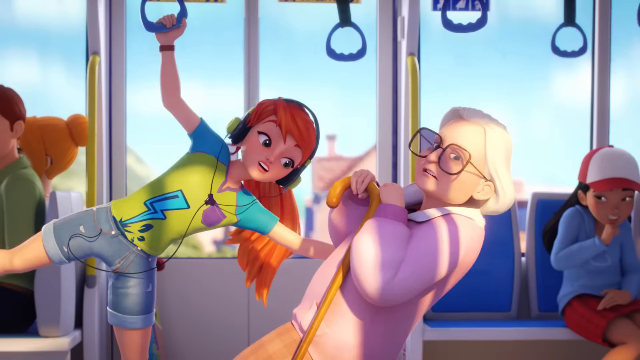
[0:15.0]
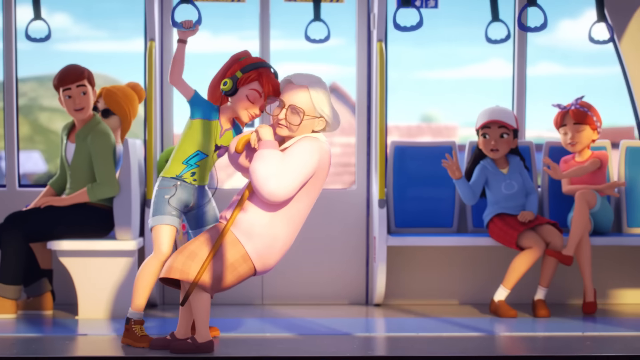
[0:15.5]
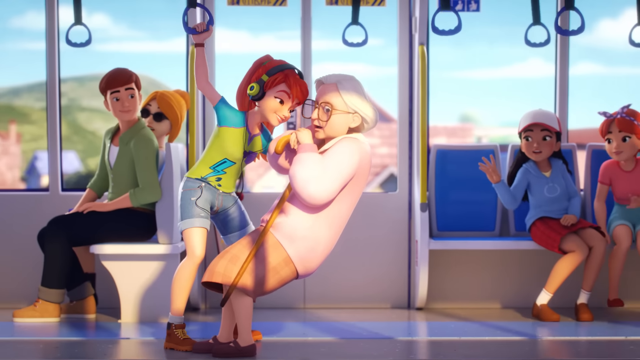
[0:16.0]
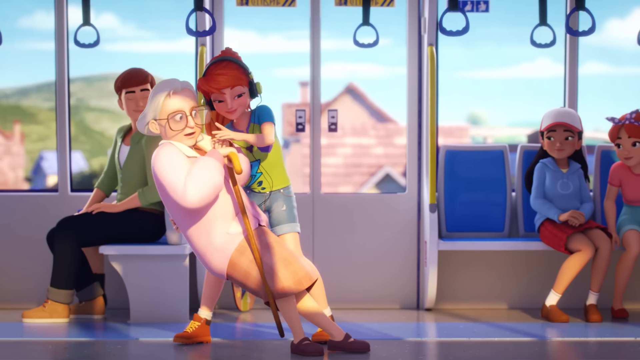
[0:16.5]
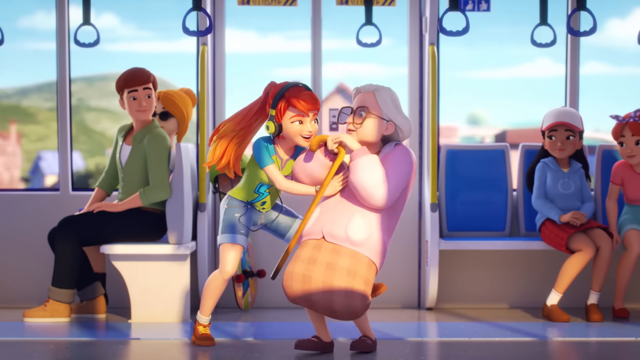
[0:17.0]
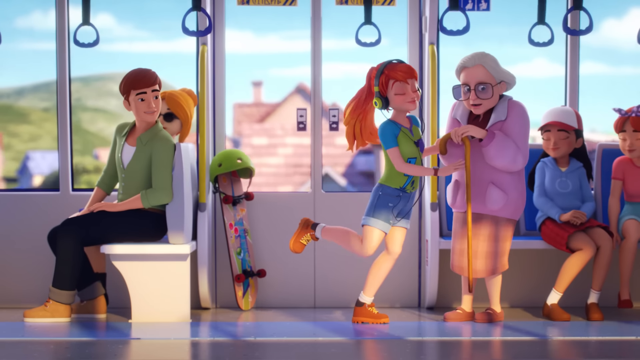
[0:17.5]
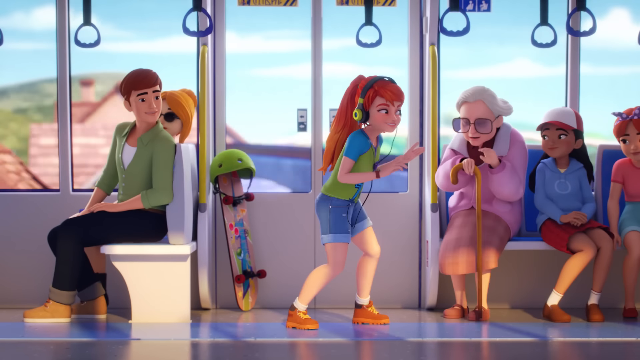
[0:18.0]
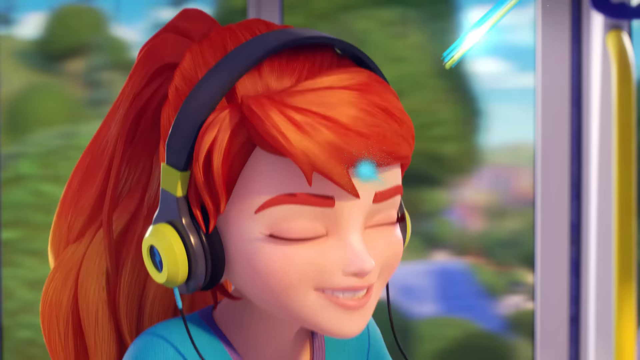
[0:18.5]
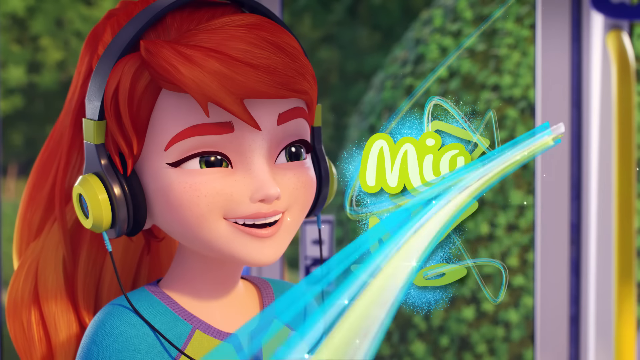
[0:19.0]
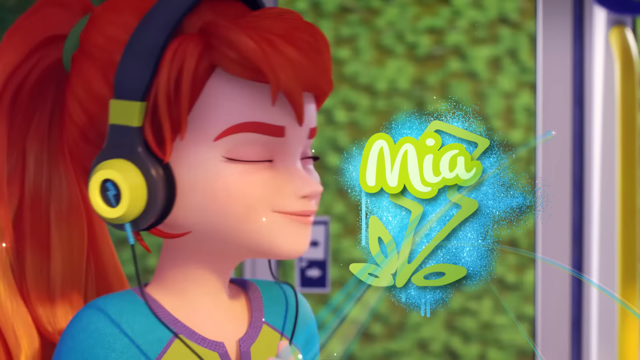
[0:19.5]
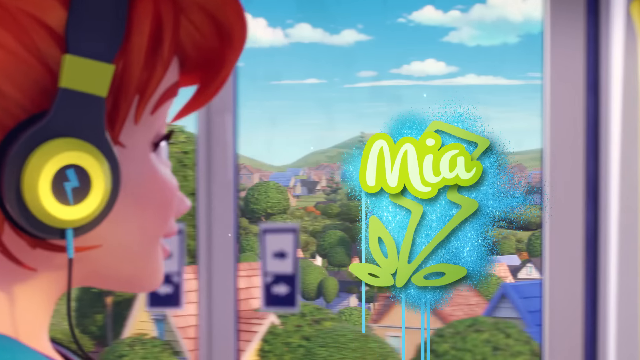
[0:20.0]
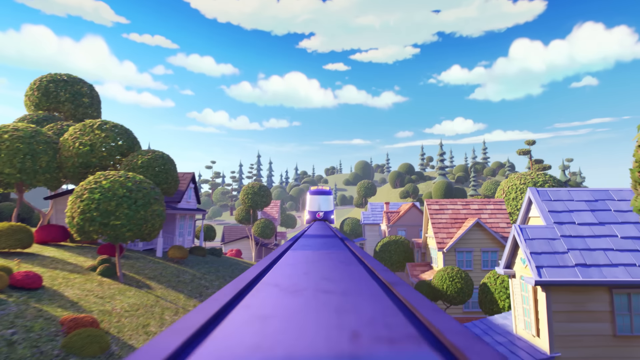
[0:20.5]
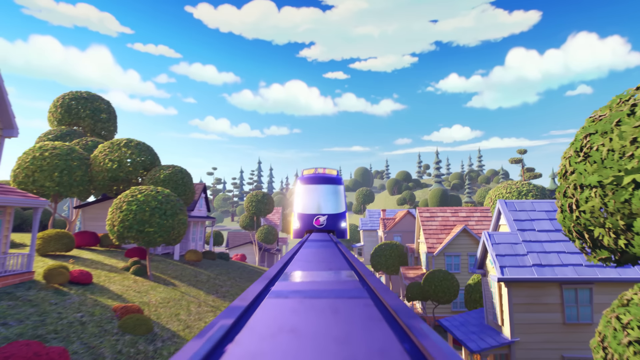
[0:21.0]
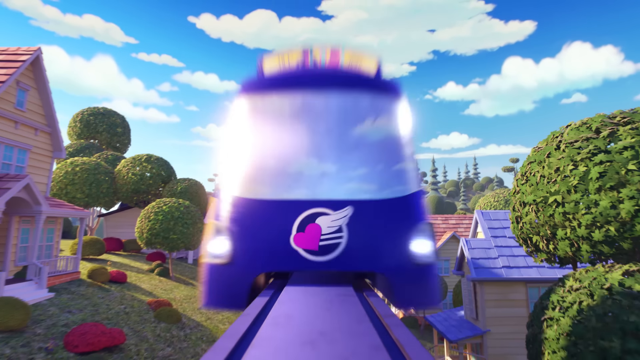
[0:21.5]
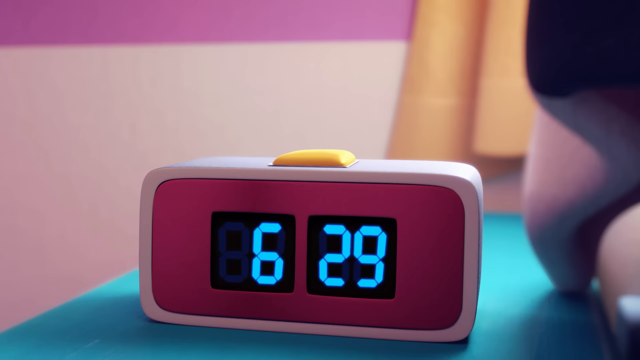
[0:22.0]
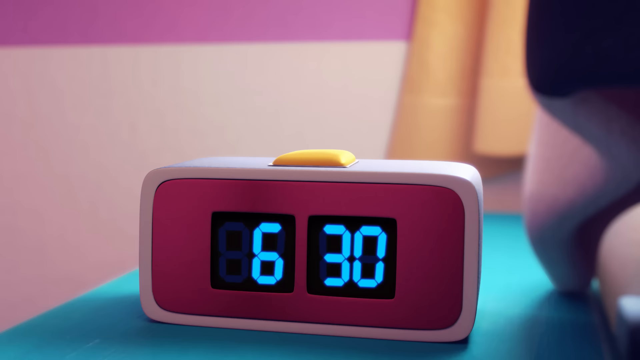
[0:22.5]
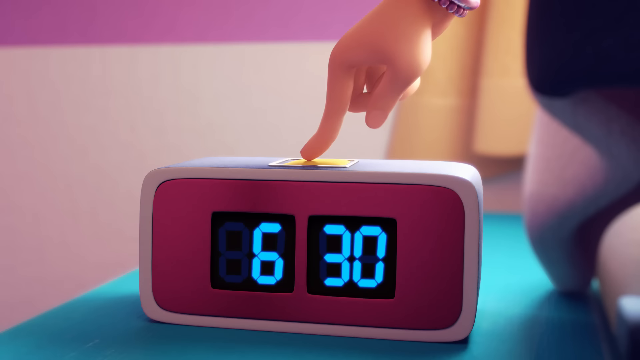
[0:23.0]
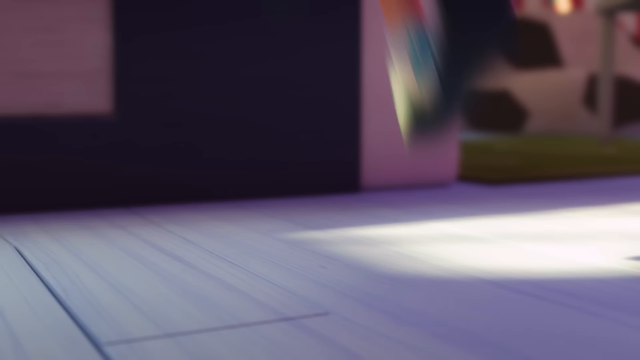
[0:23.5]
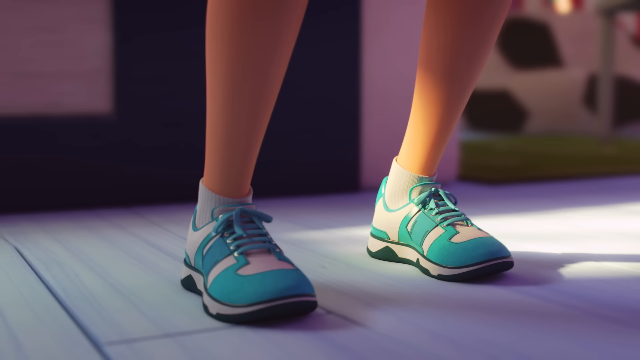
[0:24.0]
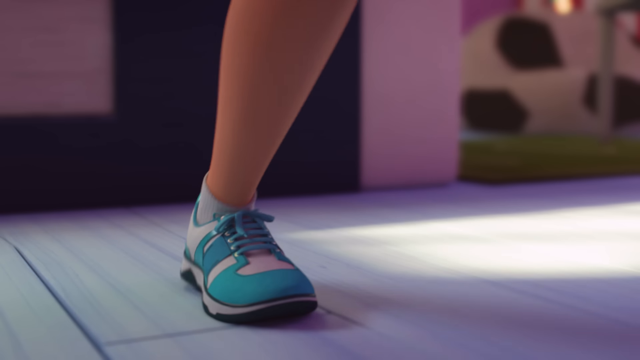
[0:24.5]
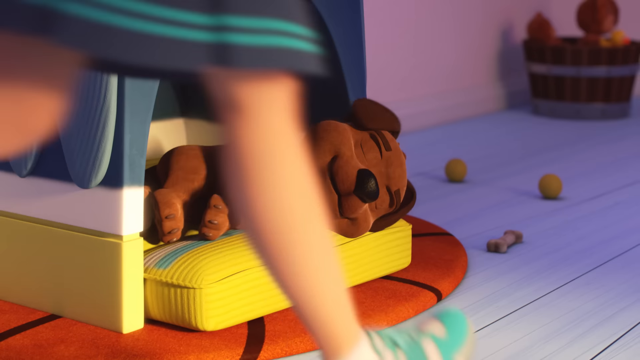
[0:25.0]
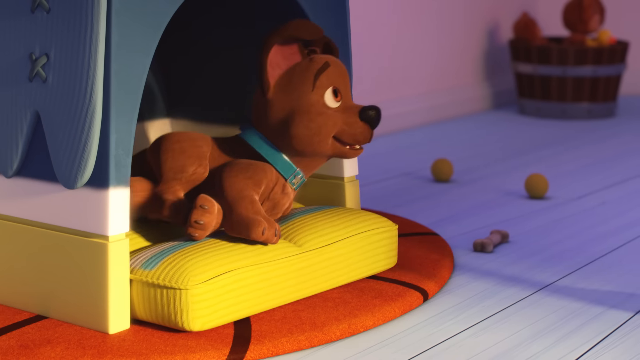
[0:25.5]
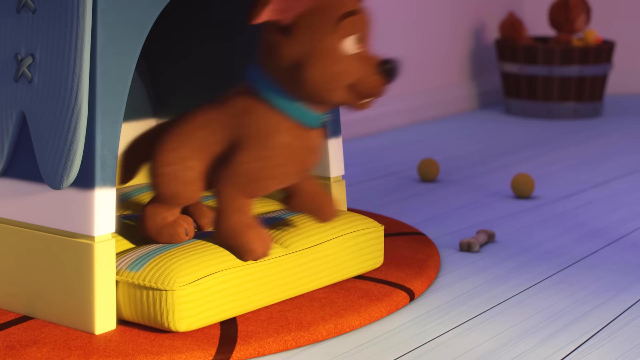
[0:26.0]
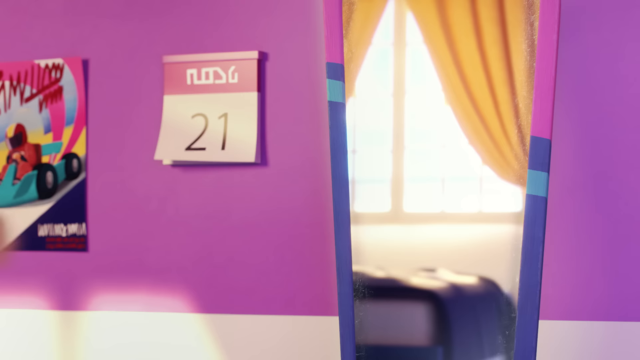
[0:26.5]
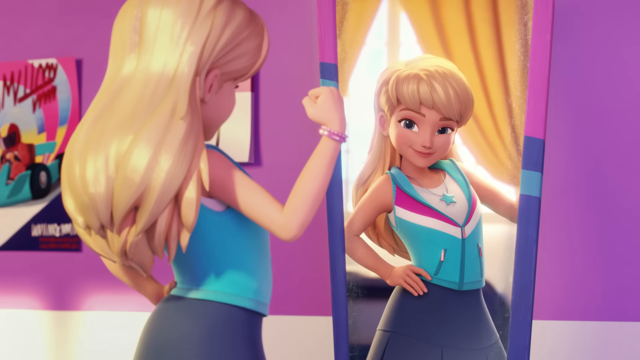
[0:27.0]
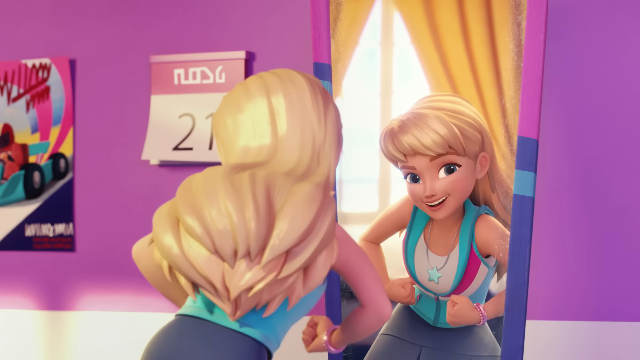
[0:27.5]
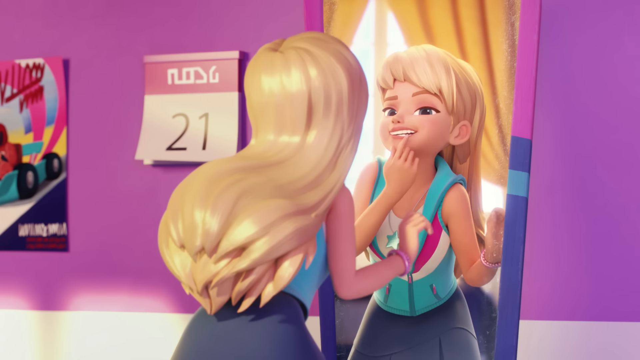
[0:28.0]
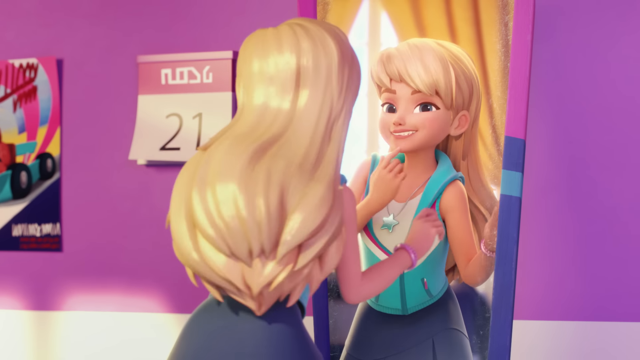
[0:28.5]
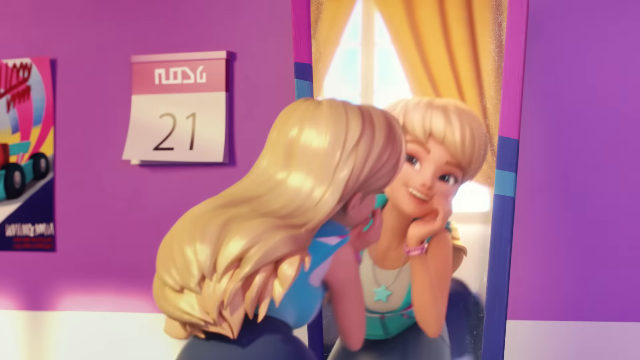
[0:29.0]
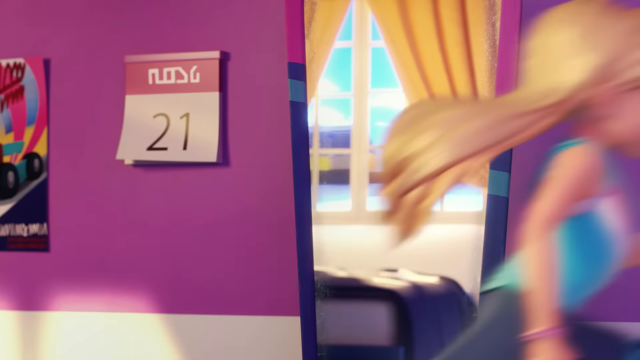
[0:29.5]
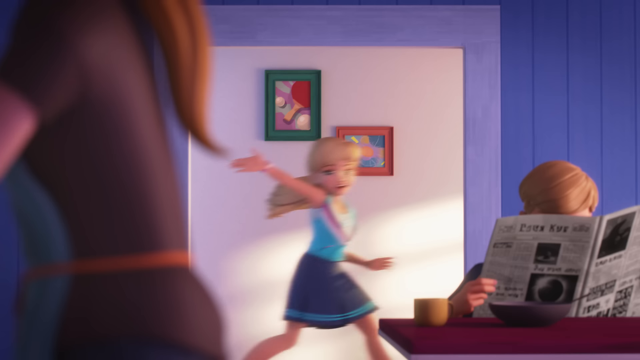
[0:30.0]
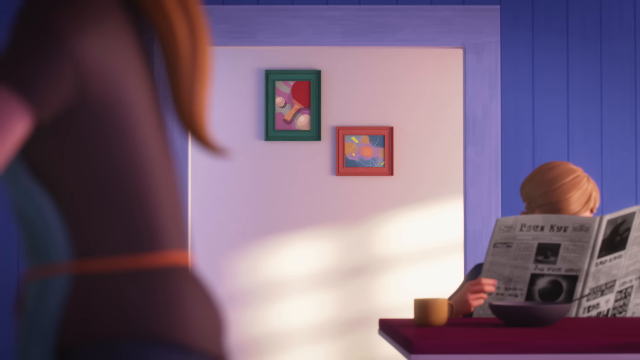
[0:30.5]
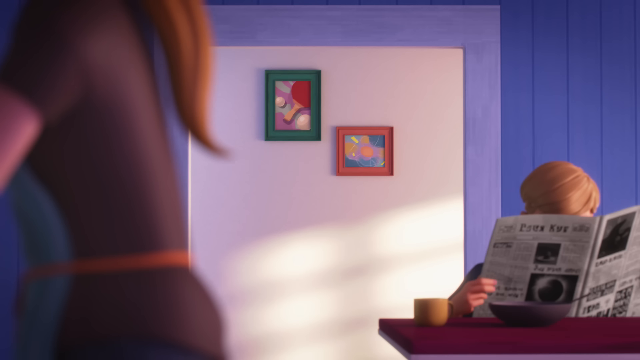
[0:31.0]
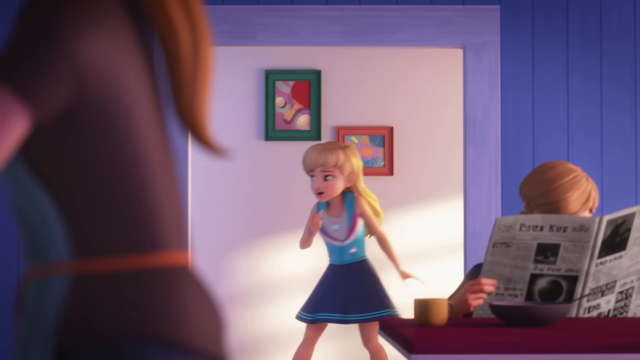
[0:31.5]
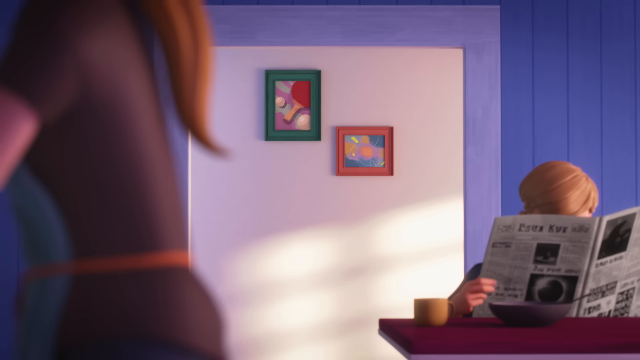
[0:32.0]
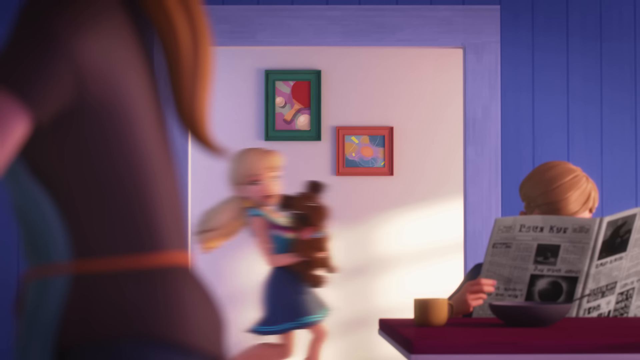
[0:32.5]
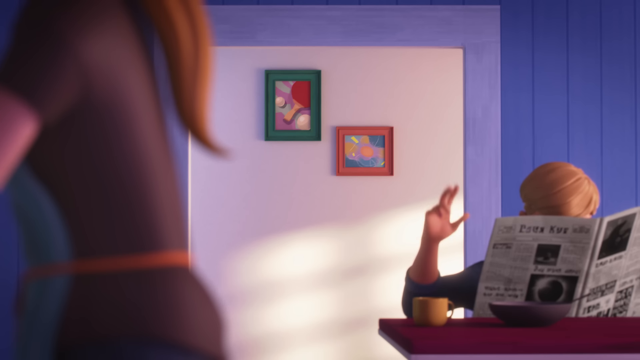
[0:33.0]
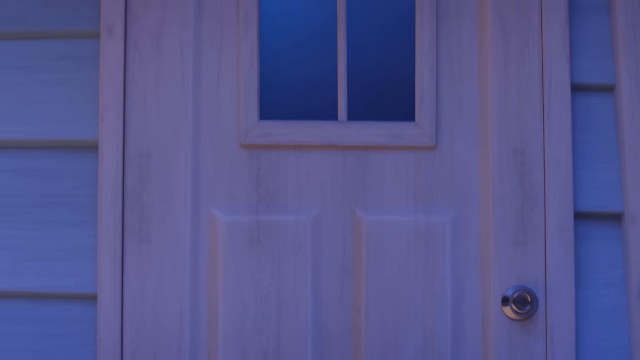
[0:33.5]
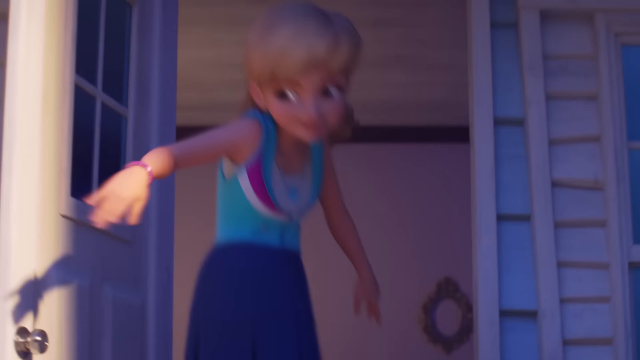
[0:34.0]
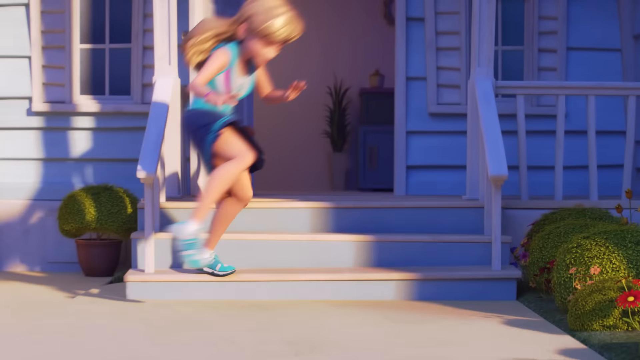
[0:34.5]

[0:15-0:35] After the train hits a bump, the old woman who was about to pass the girl is knocked off balance, and the girl catches her with one arm like a superhero and then makes her sit down. The girl's name is shown as Mia. Her friend then leaves her house, most likely to catch the train, which is seen in the background. She says goodbye to her family, having initially forgotten, and jumps out the door with the dog she also forgot.